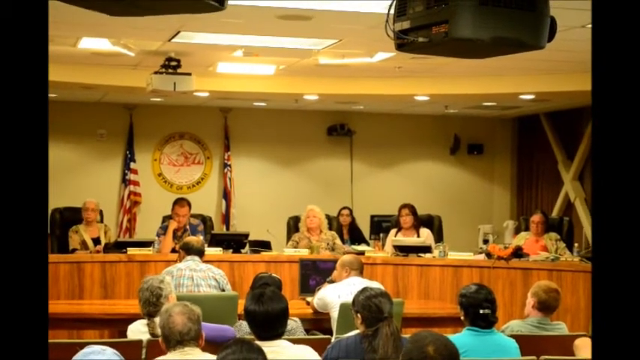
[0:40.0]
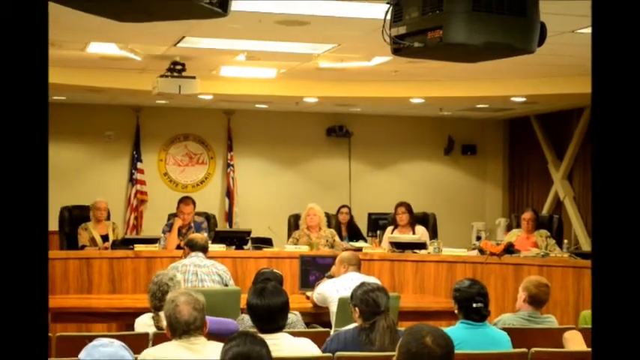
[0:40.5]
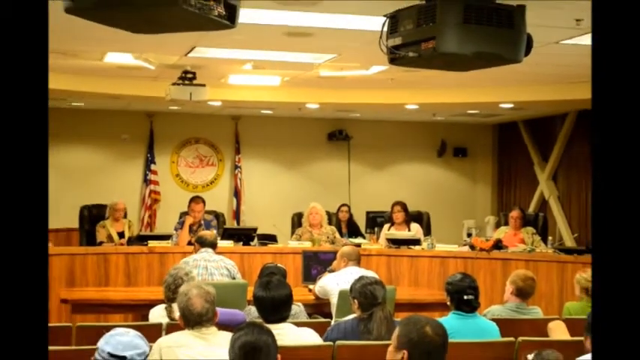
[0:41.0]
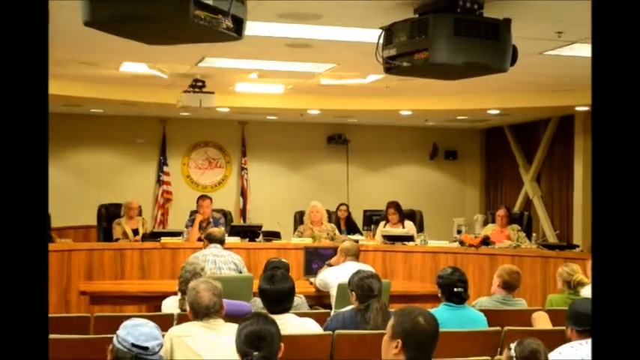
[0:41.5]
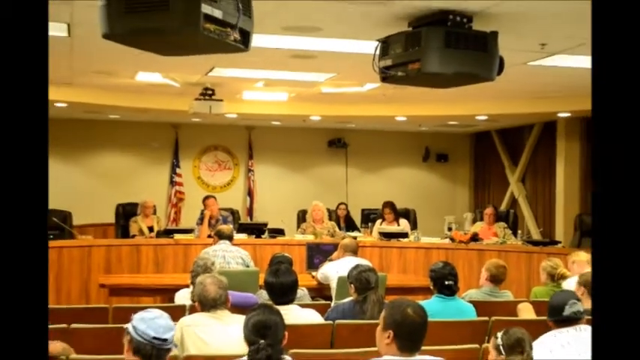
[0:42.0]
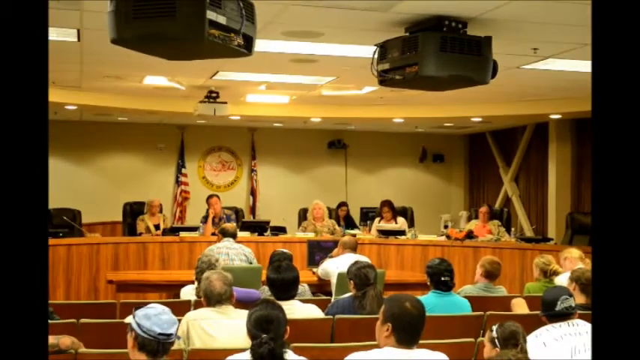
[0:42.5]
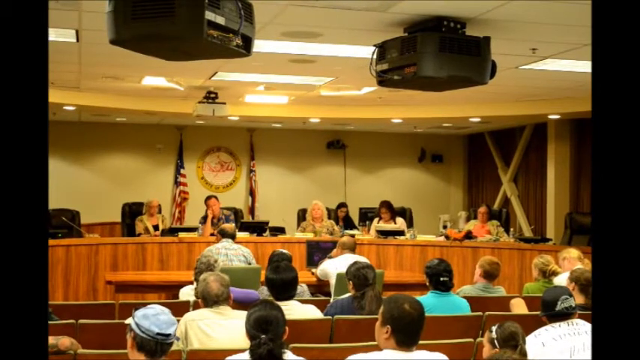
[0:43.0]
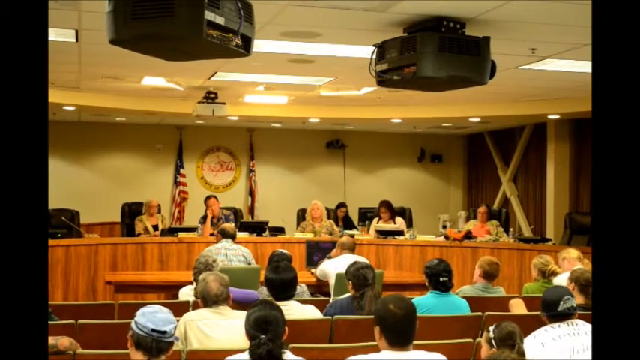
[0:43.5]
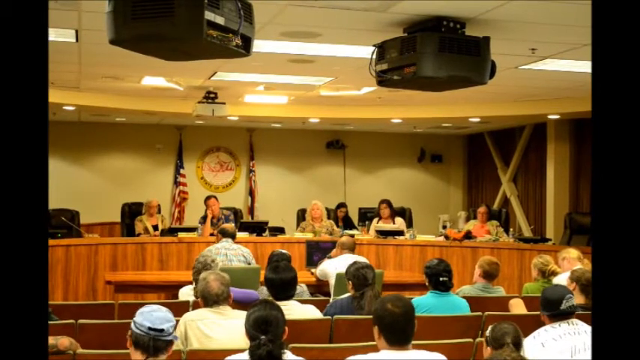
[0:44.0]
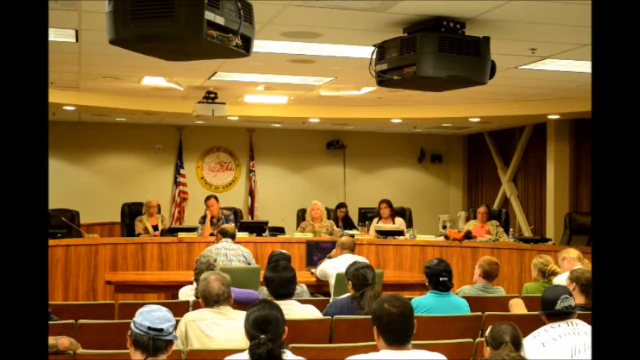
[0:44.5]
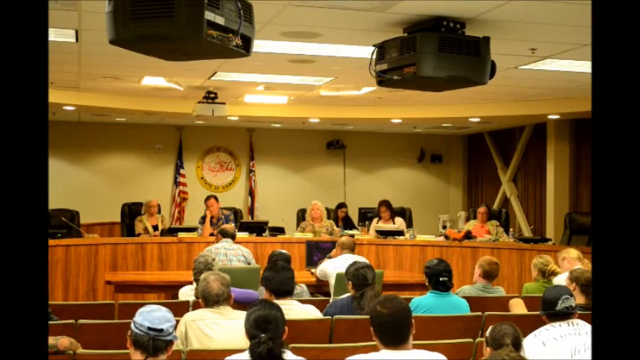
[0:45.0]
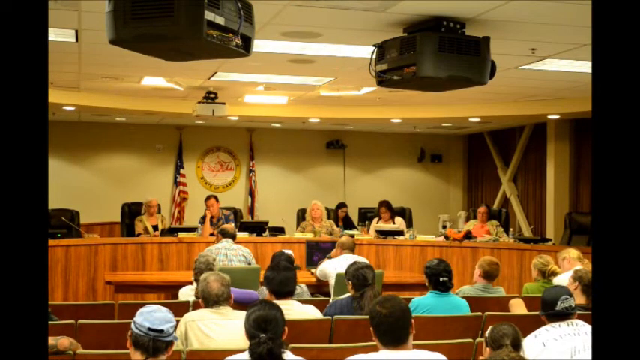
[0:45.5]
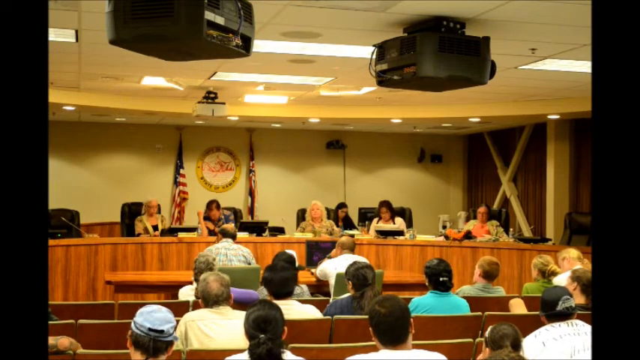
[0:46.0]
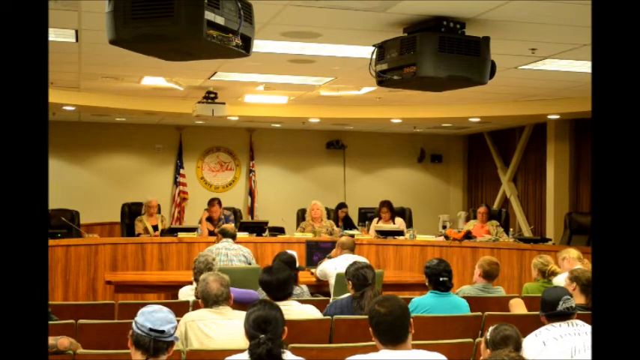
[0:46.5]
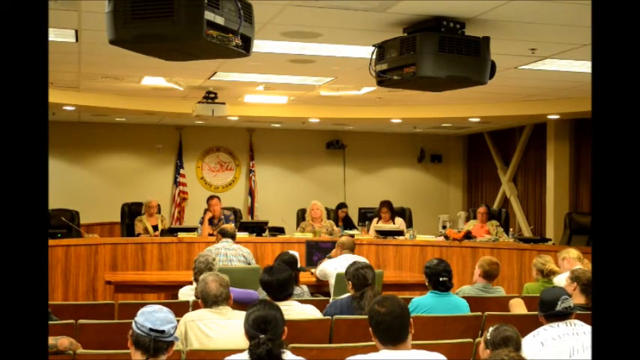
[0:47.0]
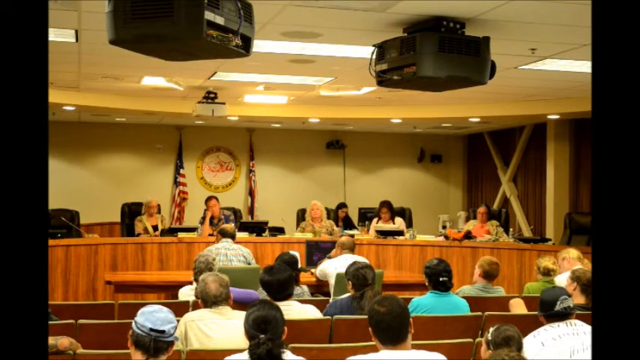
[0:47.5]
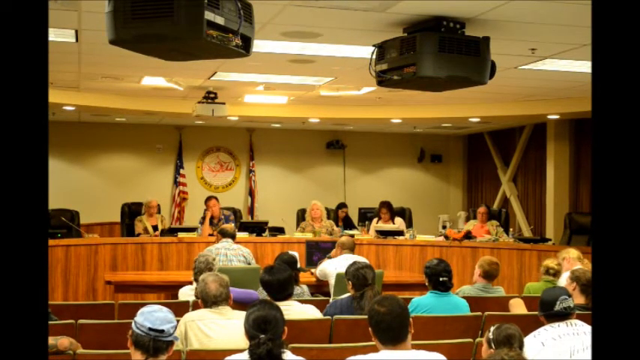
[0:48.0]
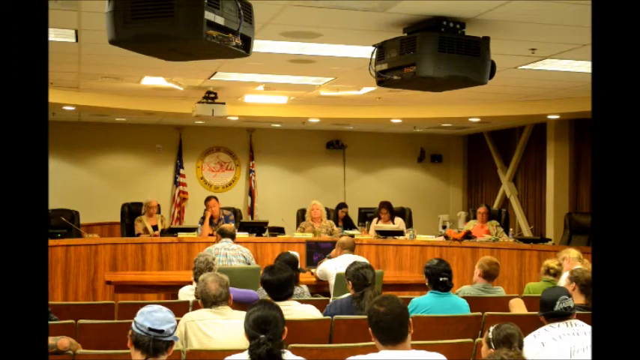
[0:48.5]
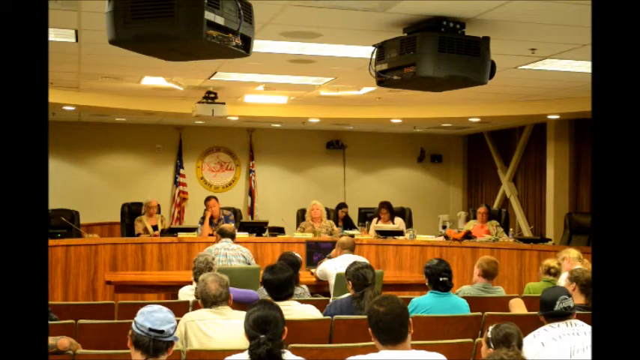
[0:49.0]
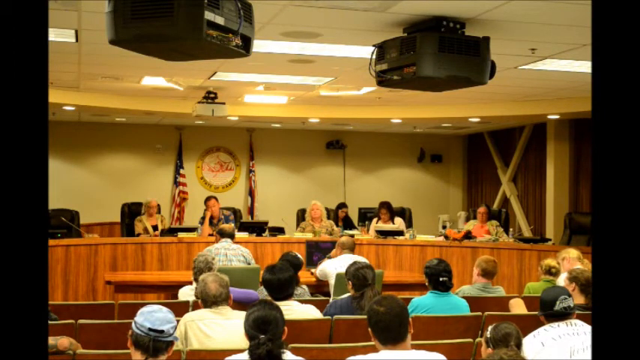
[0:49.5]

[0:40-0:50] The camera slowly zooms out on the group of people who may be speaking to the crowd. There are six of them, mostly women and one man, who looks very bored and is relaxing his head on his hand. It appears to be a long, uneventful meeting.